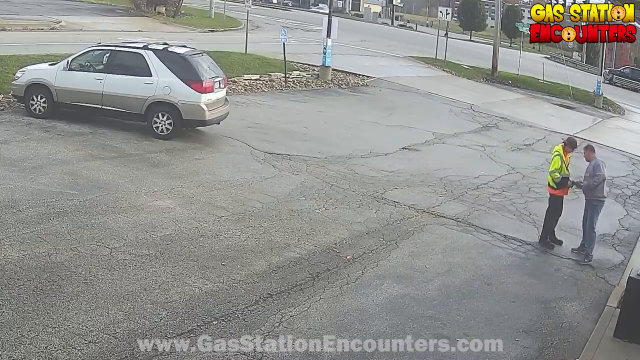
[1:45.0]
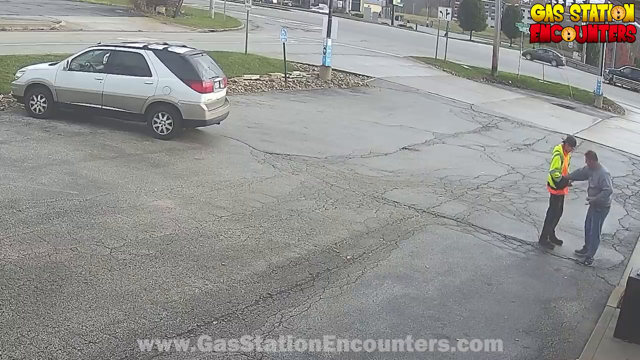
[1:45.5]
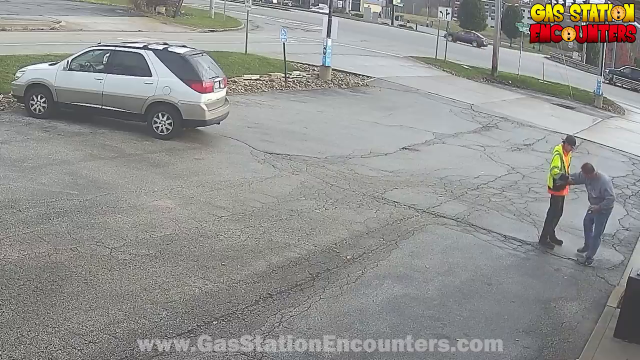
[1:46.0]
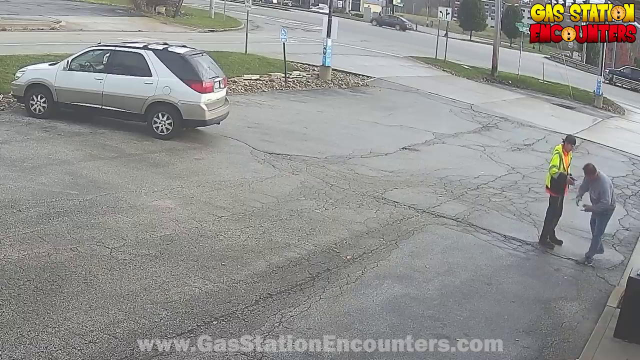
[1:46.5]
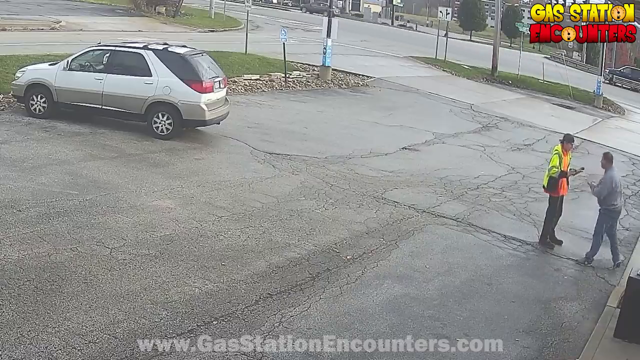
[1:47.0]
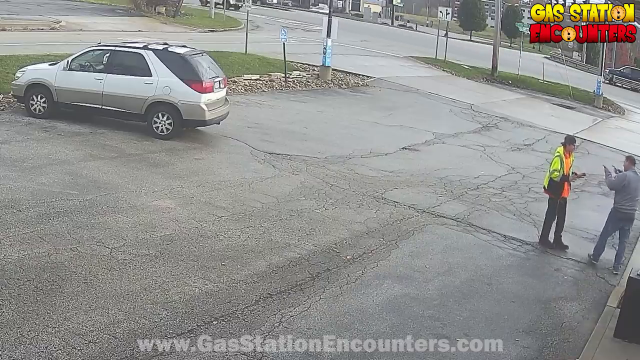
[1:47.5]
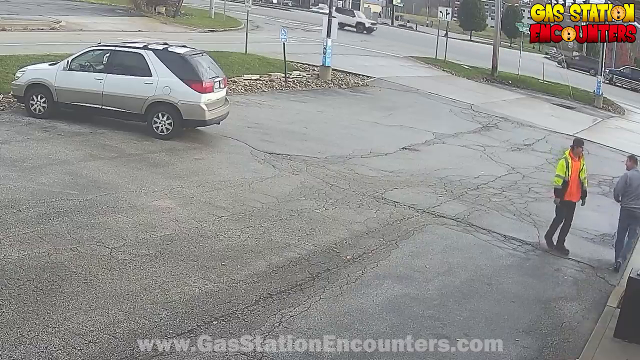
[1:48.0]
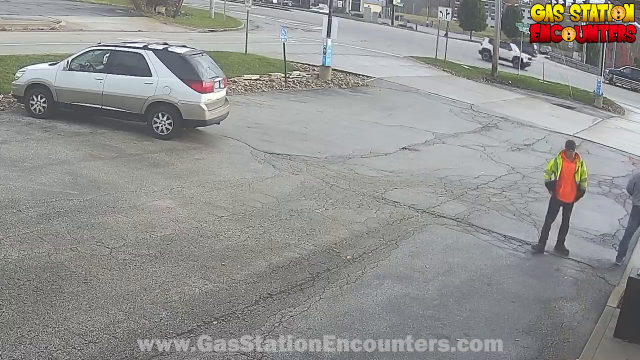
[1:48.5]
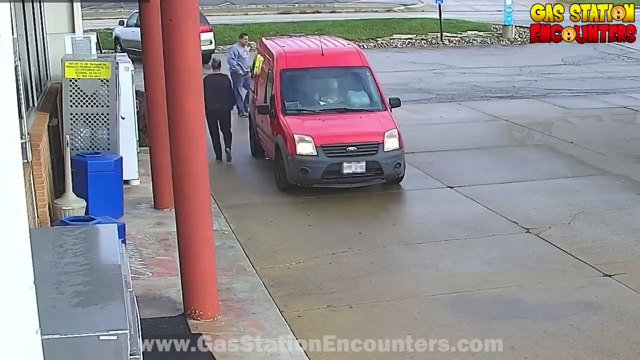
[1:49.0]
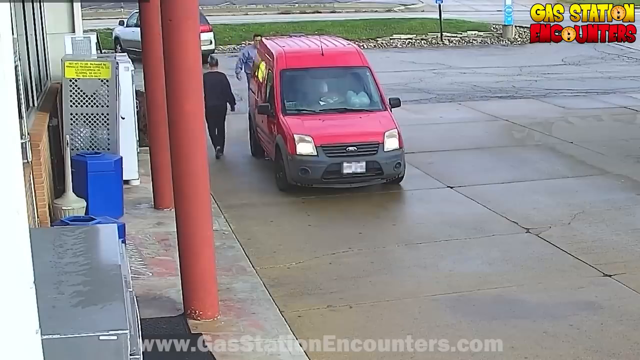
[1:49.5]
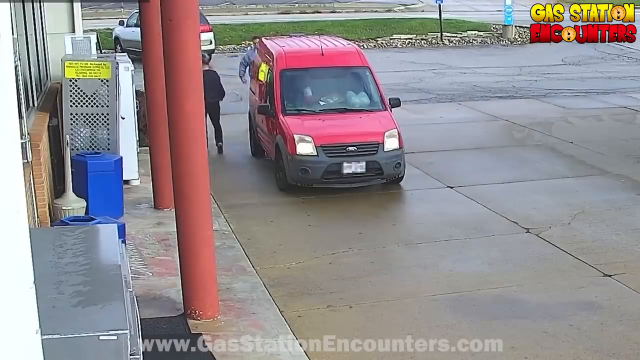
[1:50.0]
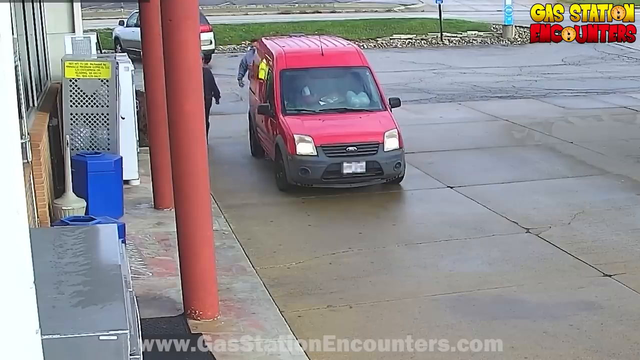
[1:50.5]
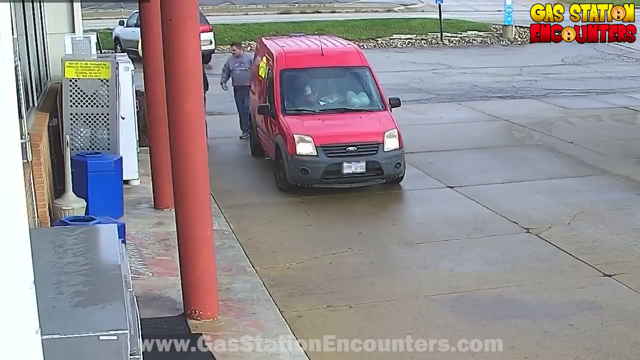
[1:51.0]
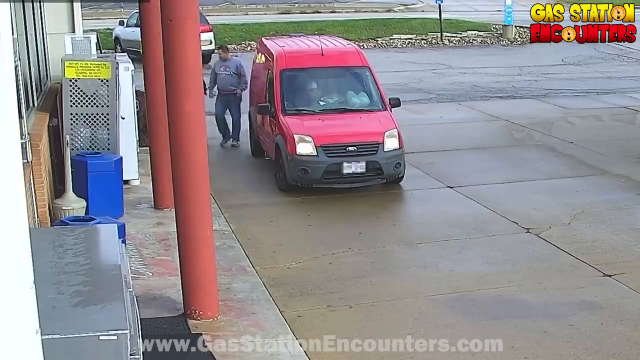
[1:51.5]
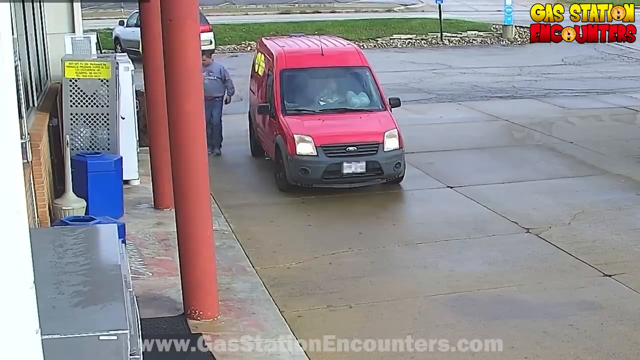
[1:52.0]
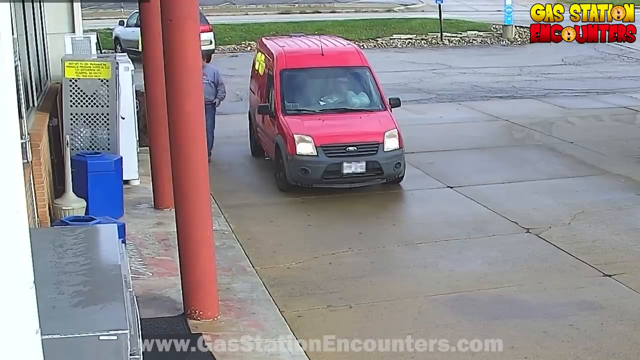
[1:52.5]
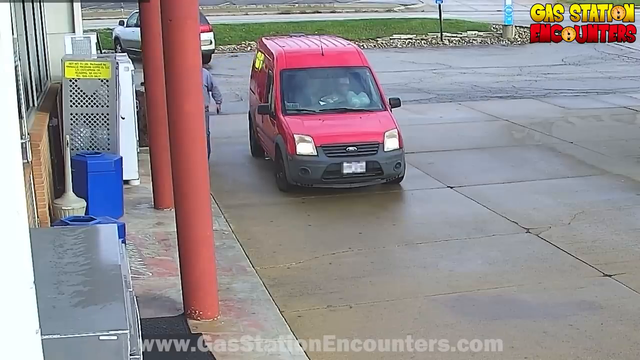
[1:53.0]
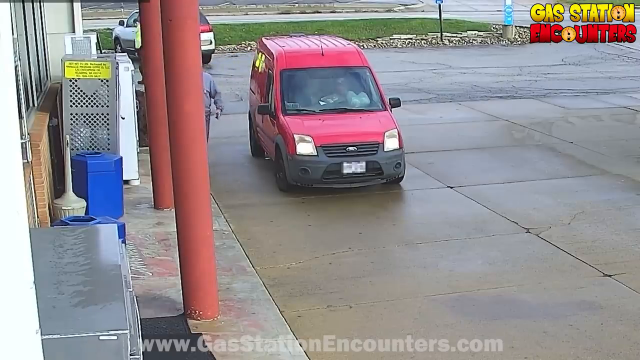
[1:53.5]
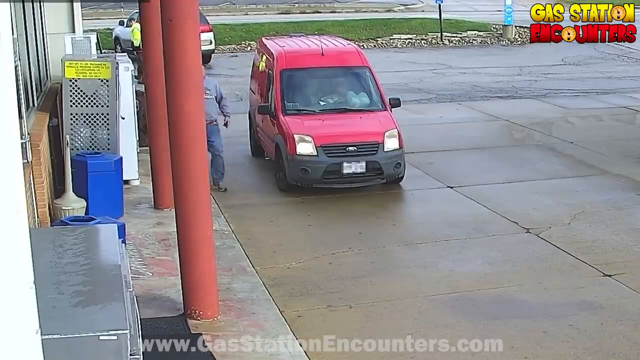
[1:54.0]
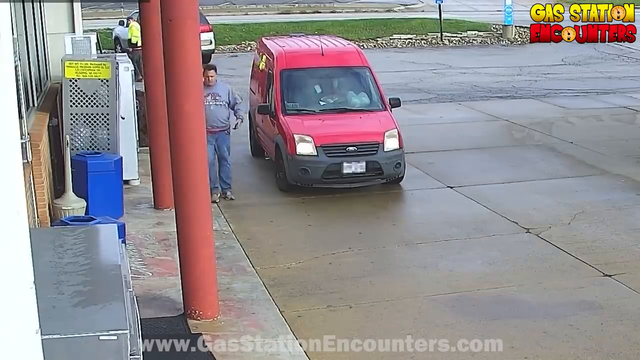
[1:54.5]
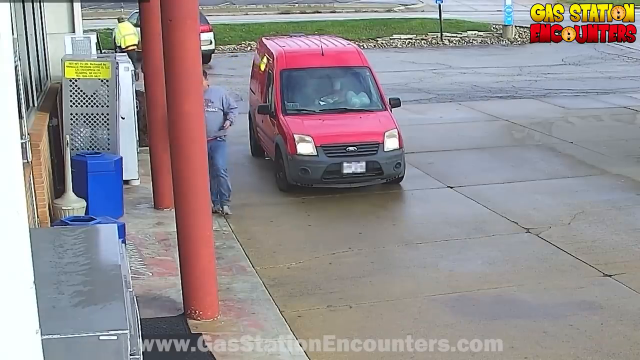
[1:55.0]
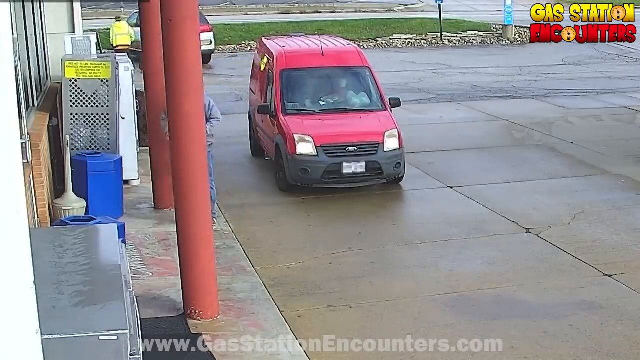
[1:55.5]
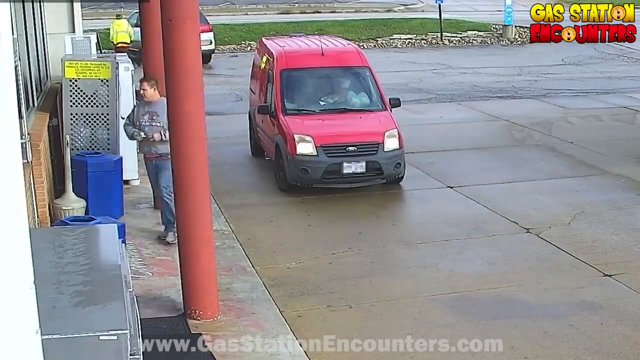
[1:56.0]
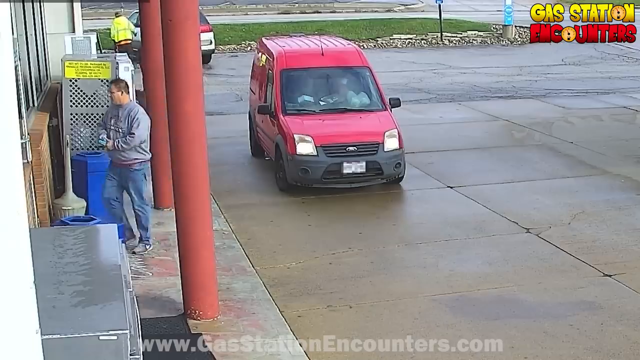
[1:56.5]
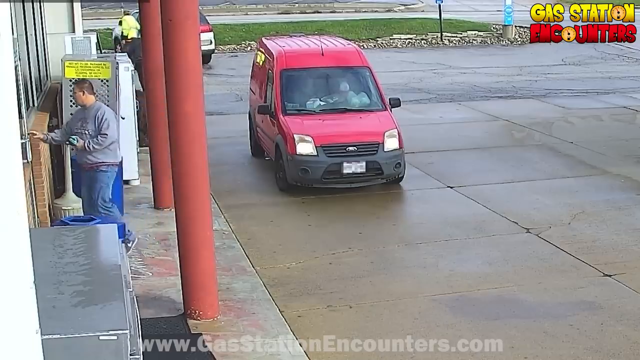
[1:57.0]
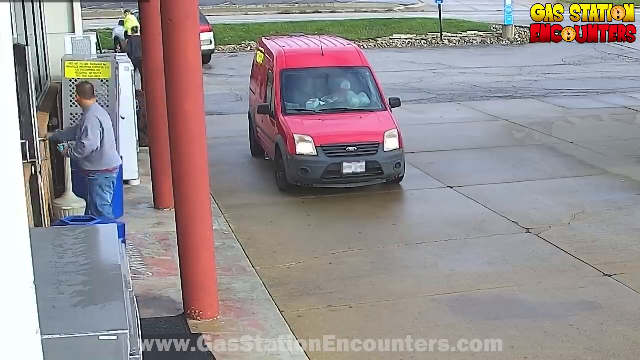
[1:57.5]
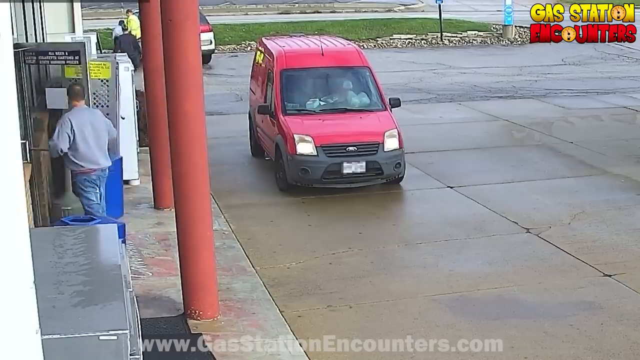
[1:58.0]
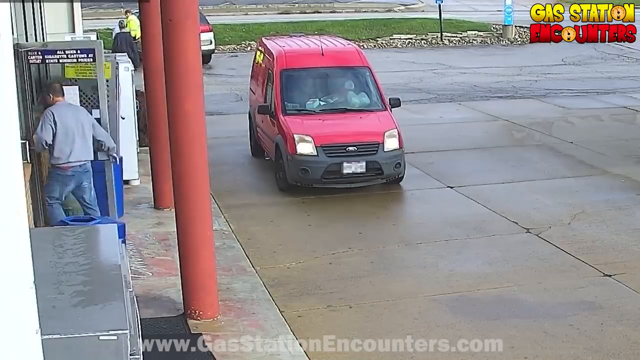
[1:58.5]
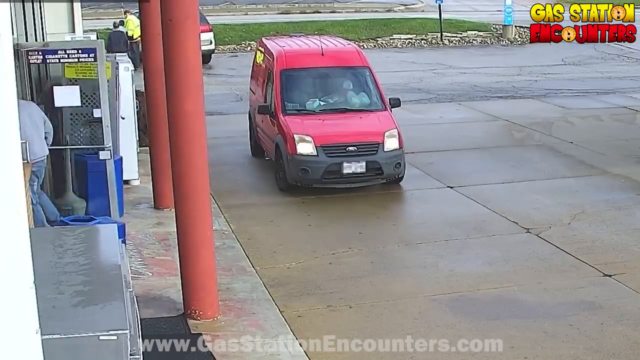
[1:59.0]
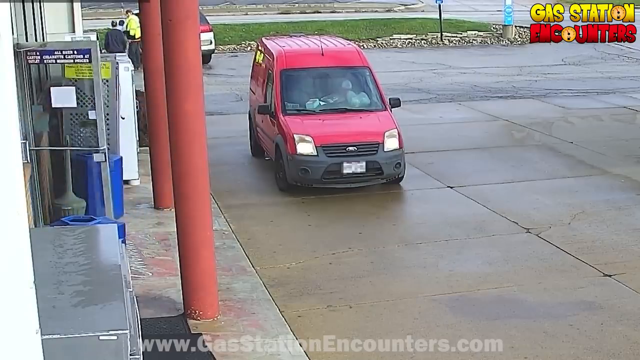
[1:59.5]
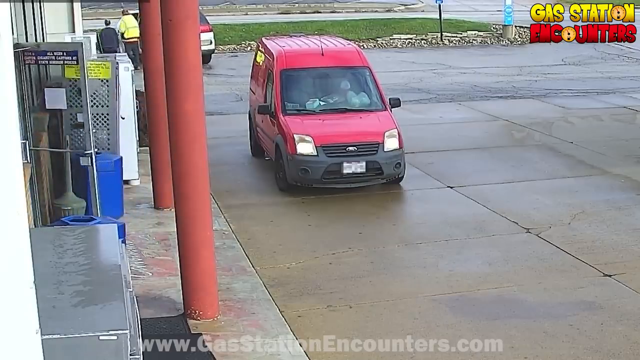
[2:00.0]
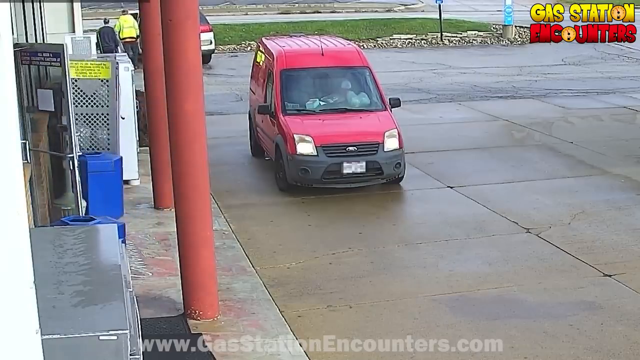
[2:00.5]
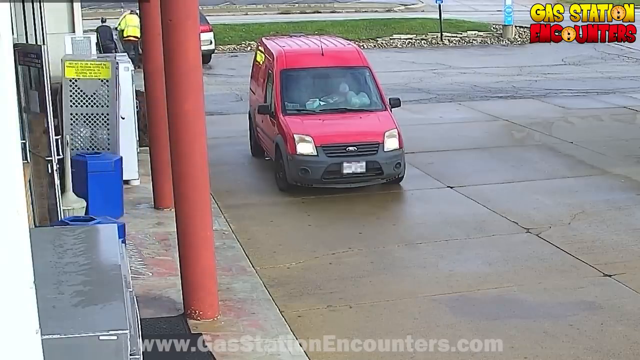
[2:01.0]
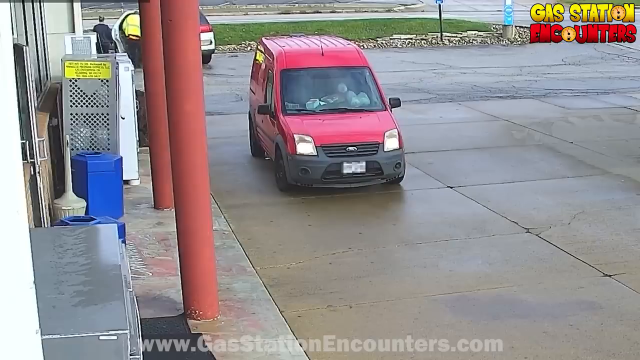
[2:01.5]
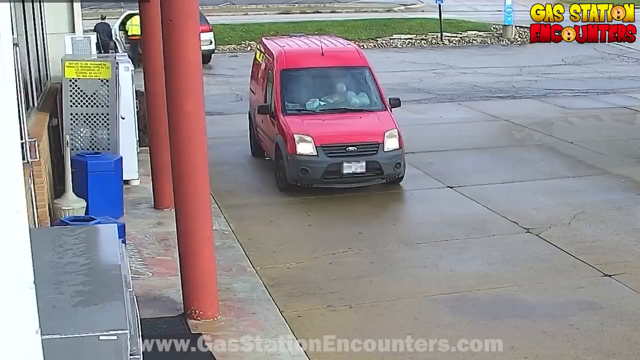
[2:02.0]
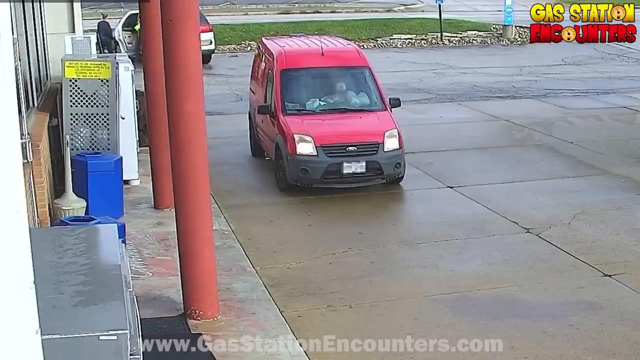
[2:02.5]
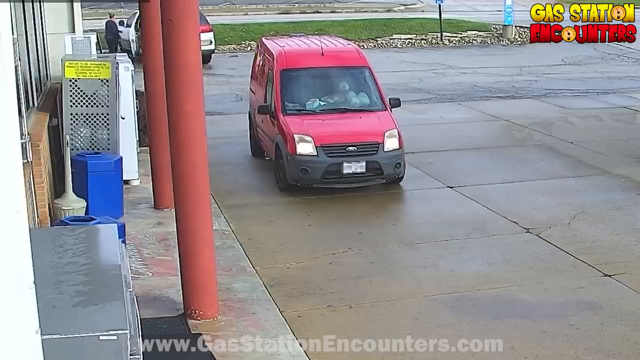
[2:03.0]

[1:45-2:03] The man in the long-sleeve gray shirt appears to pat down the pockets of the man in the yellow jacket and doesn't find anything. The two men look like they are arguing. A new camera shot shows the outside of the gas station, with a red van seen from the front, as the man in the gray shirt walks back into the gas station. The man in the yellow jacket opens his vehicle's car door far in the back of the parking lot. A third person walks by, apparently the woman in the black sweatshirt, who appears to be with the man in the yellow jacket.